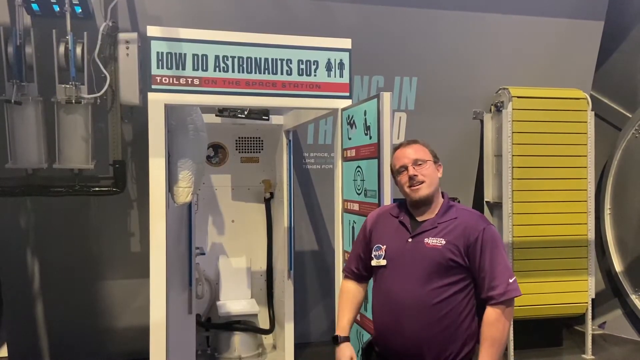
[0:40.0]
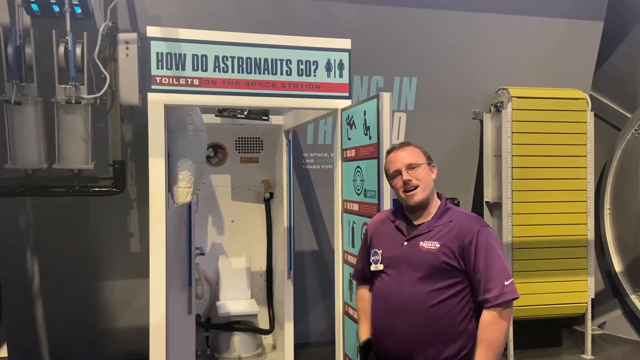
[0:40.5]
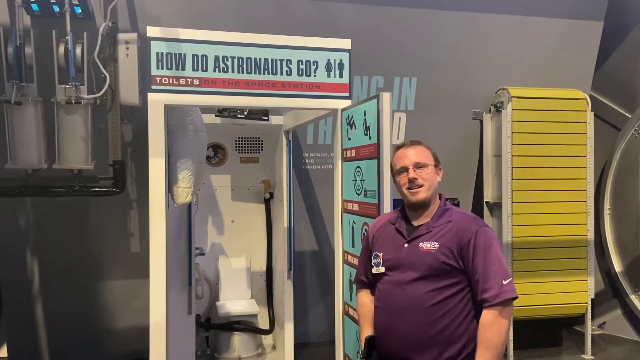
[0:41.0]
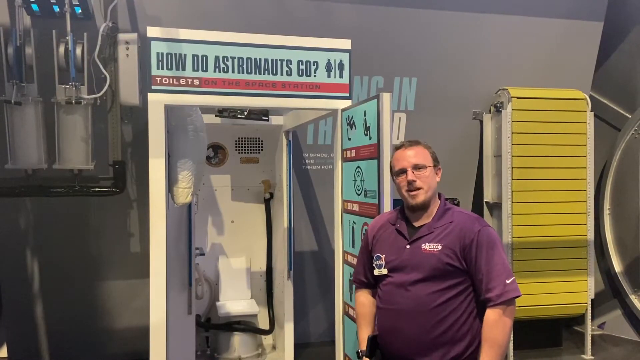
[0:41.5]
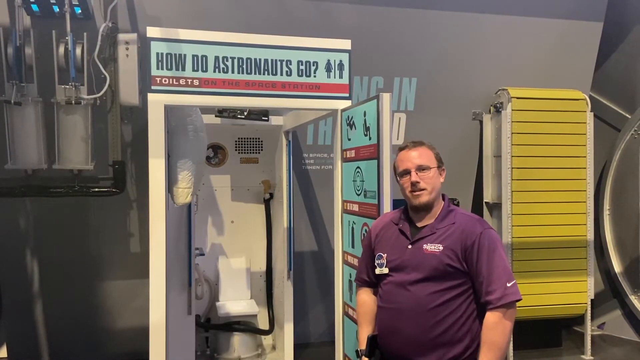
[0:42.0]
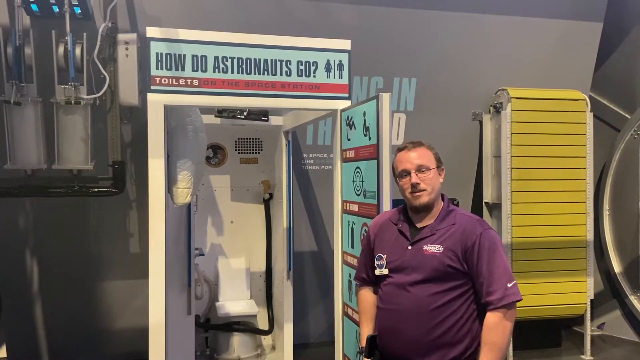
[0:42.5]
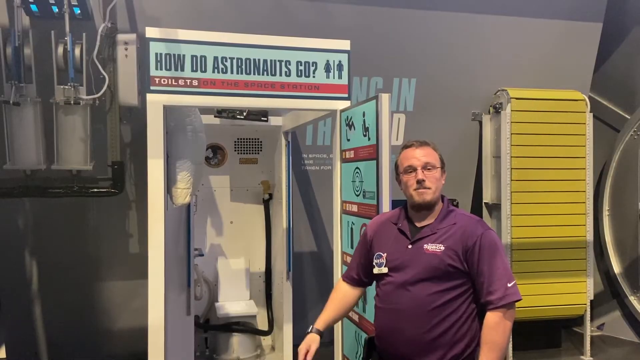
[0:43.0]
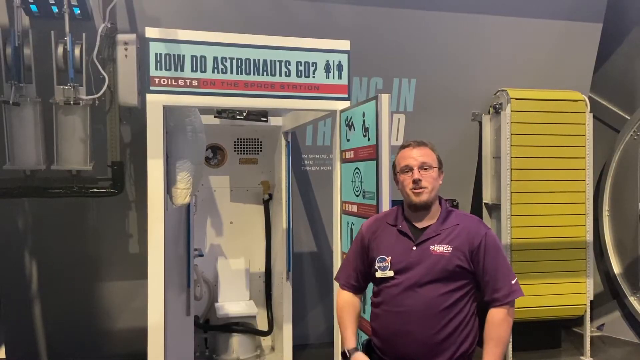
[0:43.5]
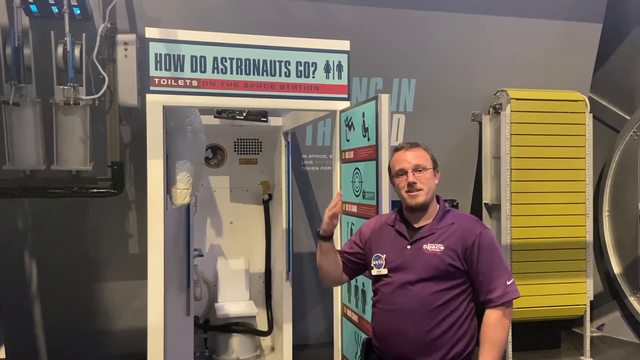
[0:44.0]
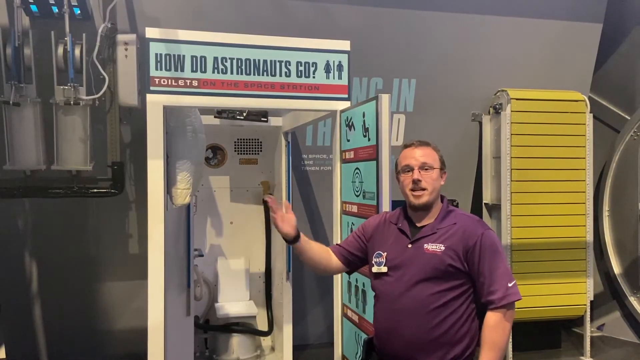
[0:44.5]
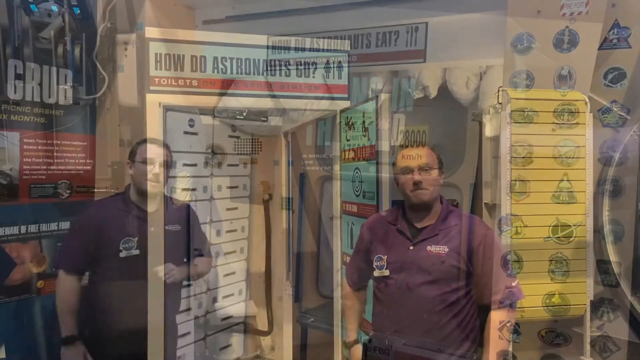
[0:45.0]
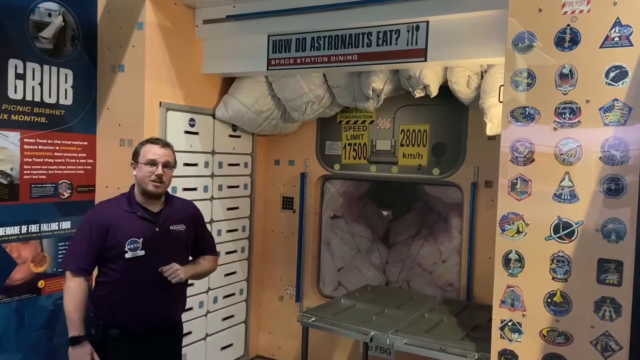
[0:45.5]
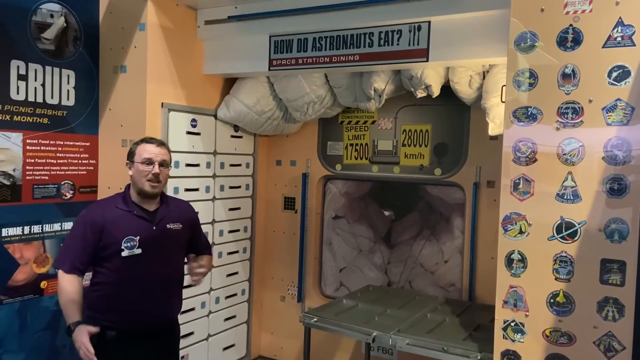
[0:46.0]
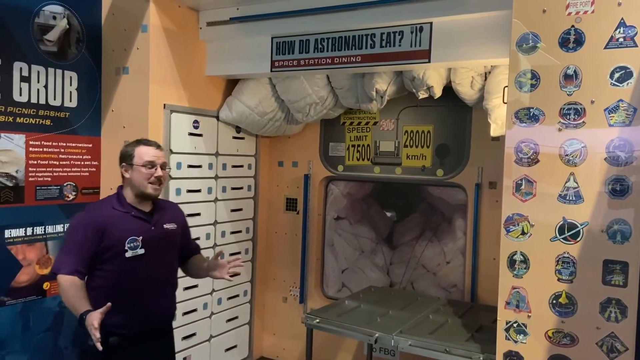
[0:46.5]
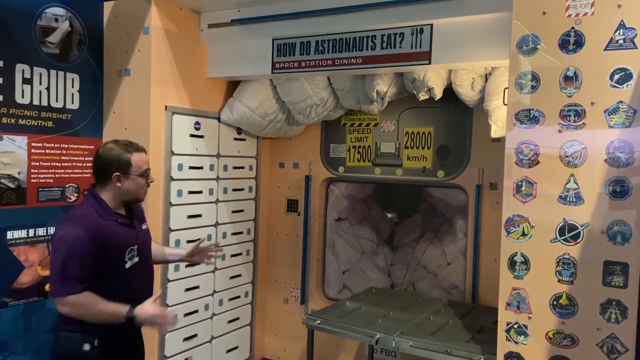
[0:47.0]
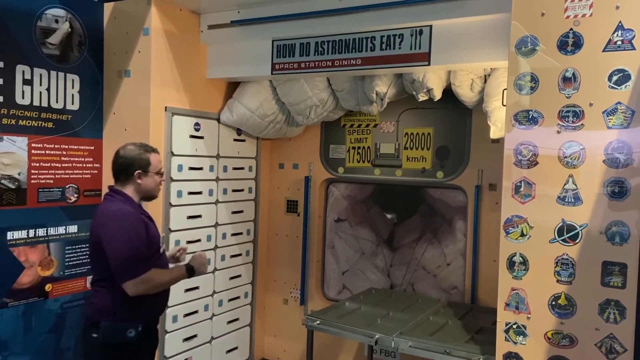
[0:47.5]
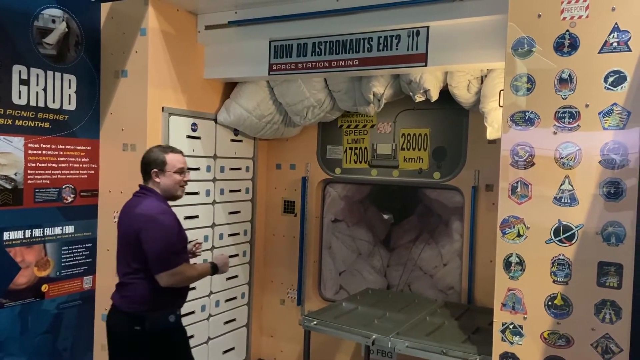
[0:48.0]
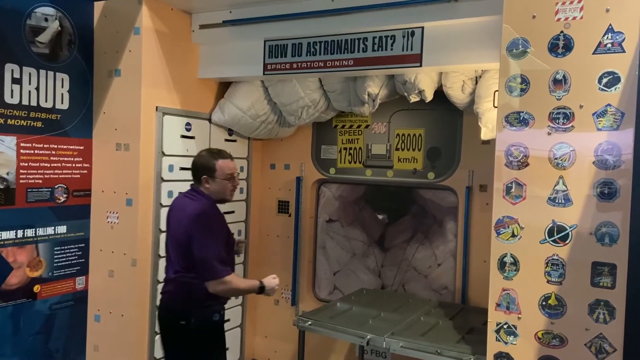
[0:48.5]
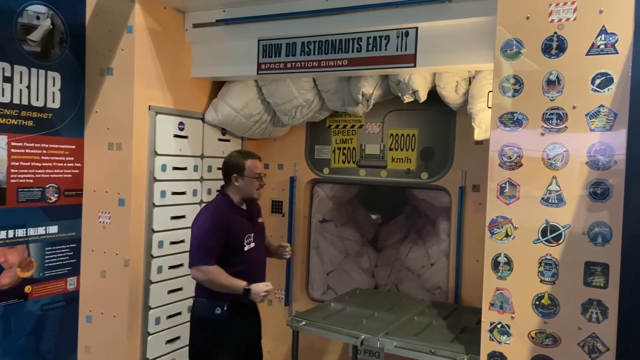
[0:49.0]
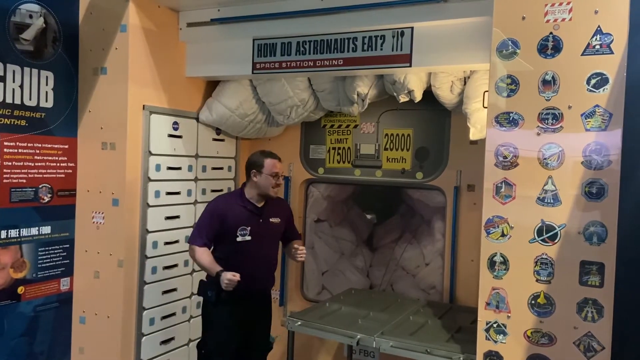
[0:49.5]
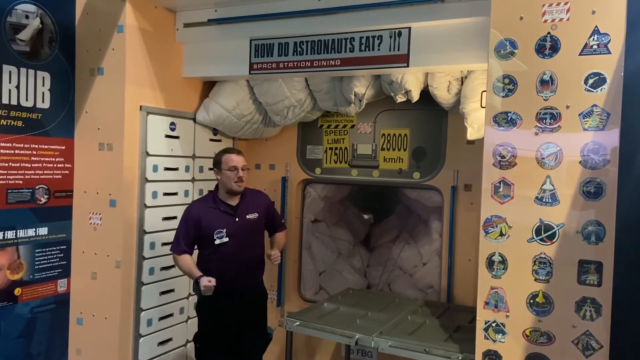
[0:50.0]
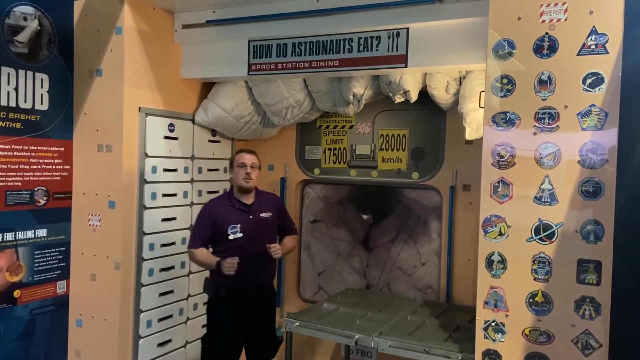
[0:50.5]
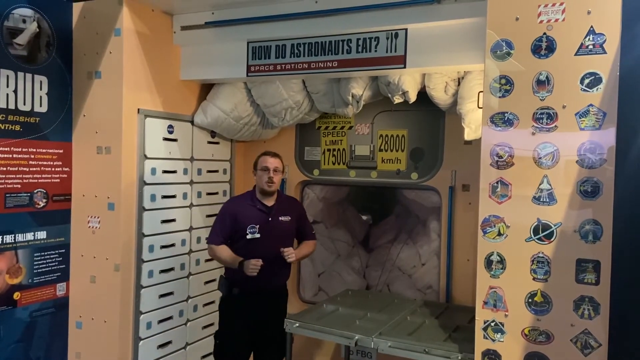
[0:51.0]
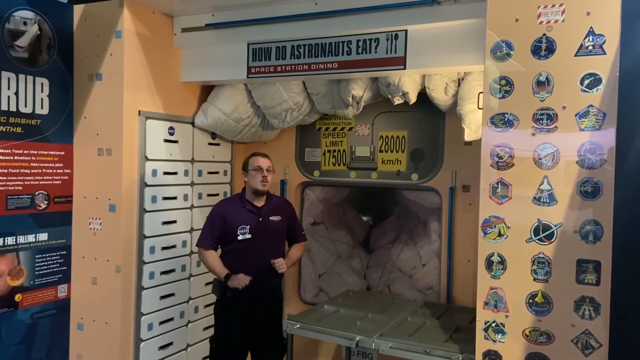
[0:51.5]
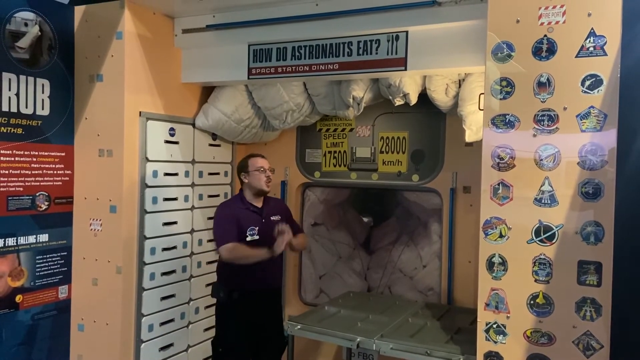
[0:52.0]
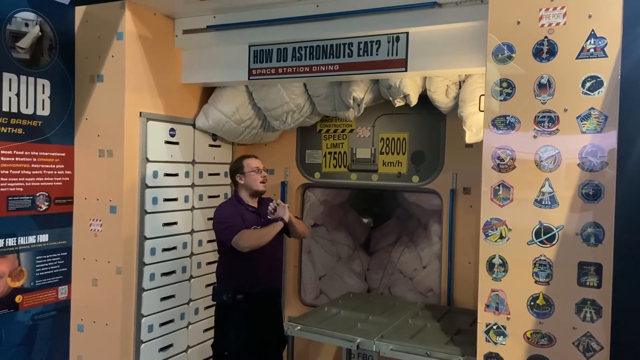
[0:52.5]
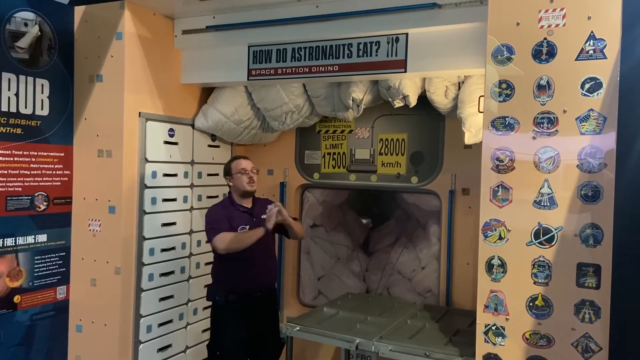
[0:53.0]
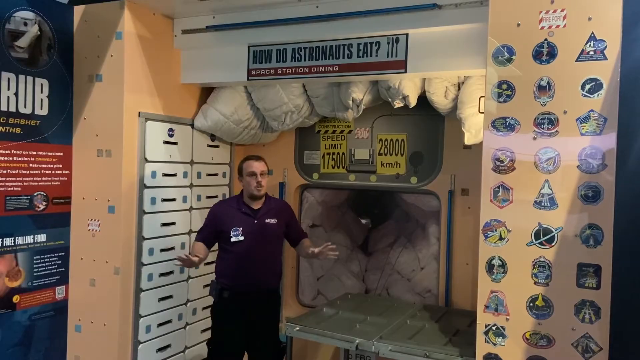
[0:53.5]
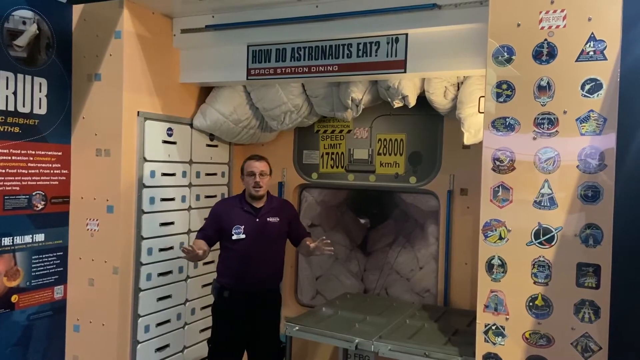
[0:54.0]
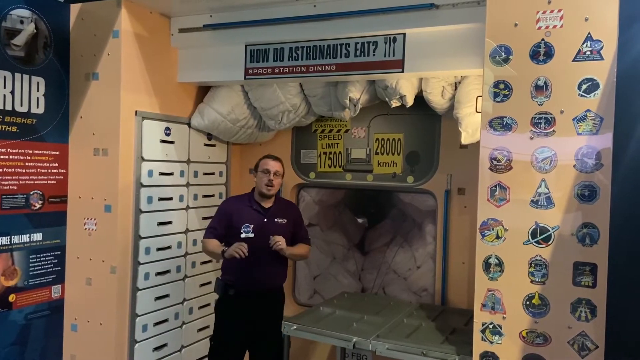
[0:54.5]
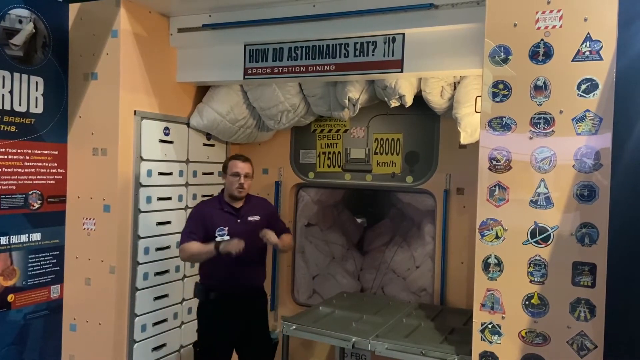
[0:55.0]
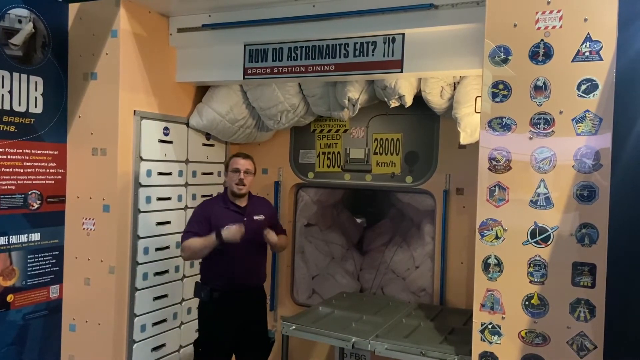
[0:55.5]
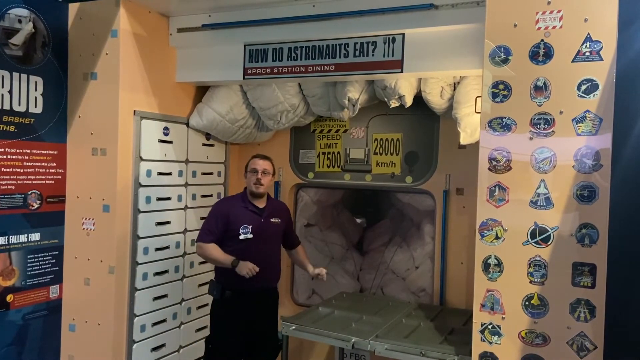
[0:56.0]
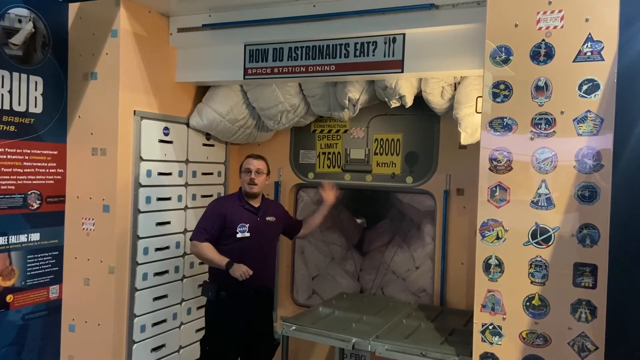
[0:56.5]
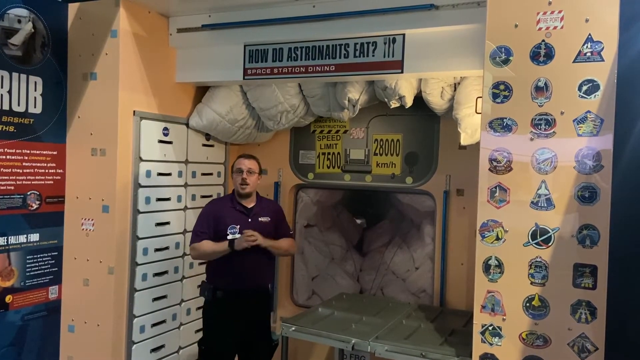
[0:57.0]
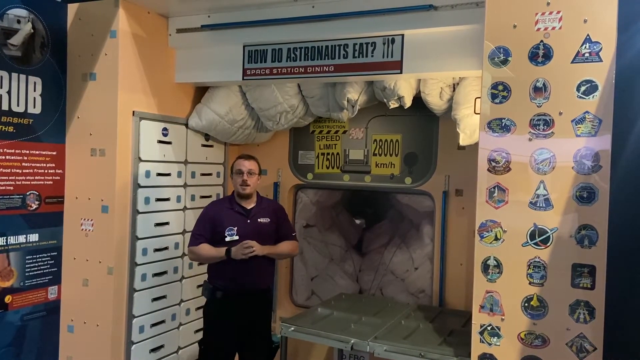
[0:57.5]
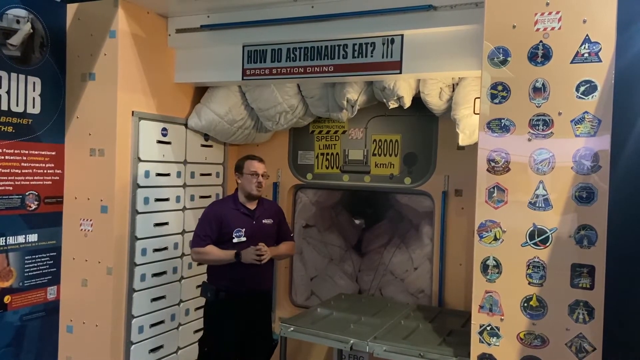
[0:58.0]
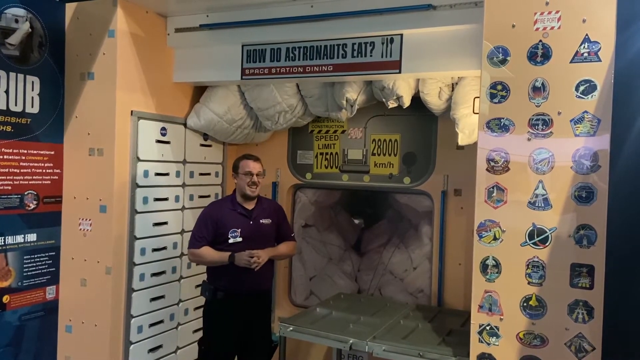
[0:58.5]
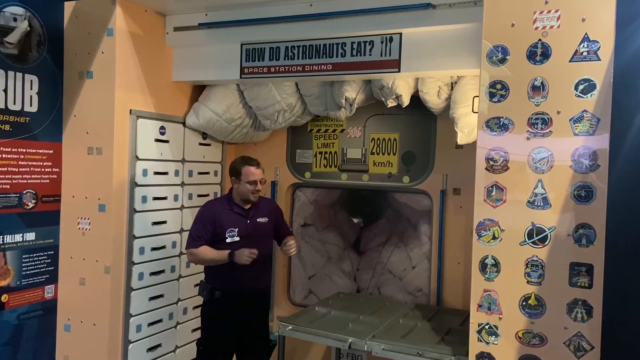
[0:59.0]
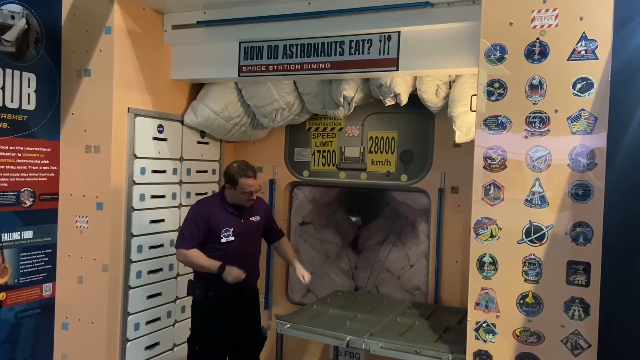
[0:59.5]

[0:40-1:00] The man continues the same presentation with no change in the visuals at first. A few seconds in, the video transitions to another part of what appears to be the same room. A sign reads "how do astronauts eat?" with a picture of a fork, knife and spoon right next to the question, and right below it the text "space station dining." The man is in the bottom left, continuing the same sort of presentation. On the wall to the right are many different emblems, apparently space-related; no words are visible on them because they are so far away.